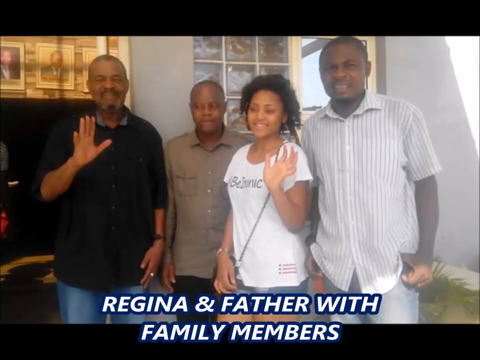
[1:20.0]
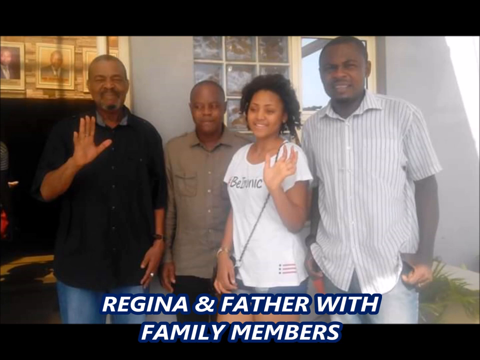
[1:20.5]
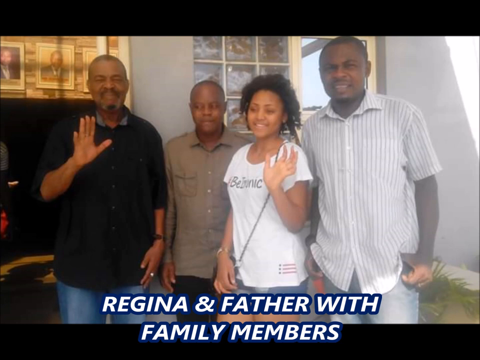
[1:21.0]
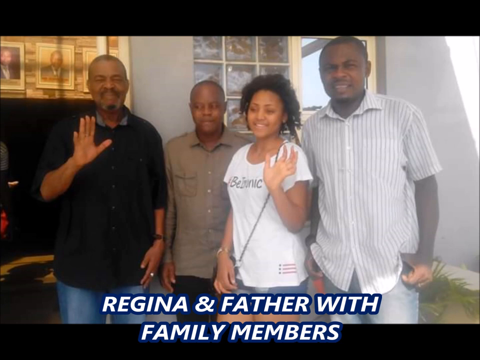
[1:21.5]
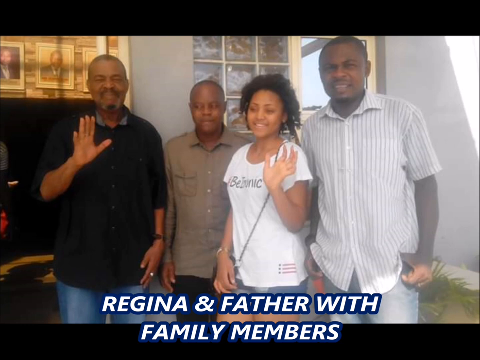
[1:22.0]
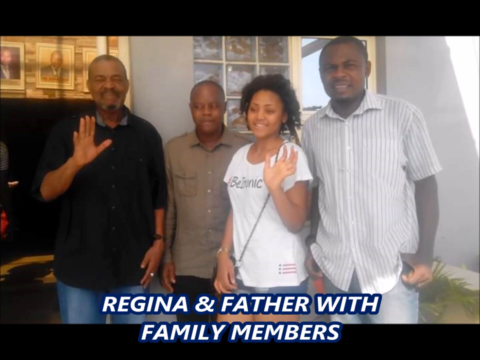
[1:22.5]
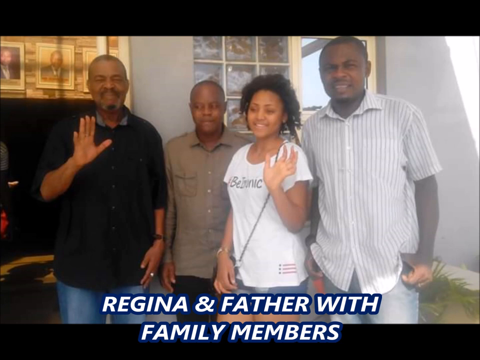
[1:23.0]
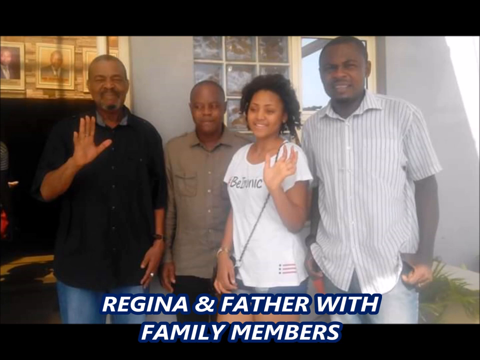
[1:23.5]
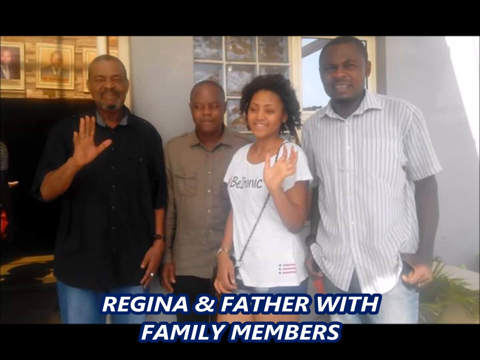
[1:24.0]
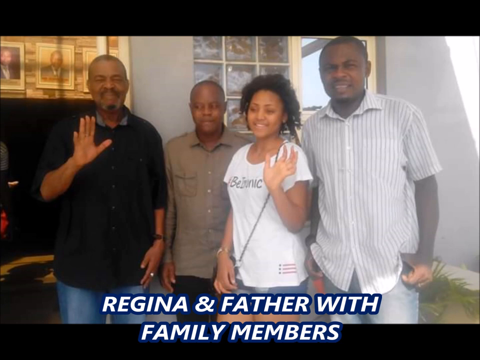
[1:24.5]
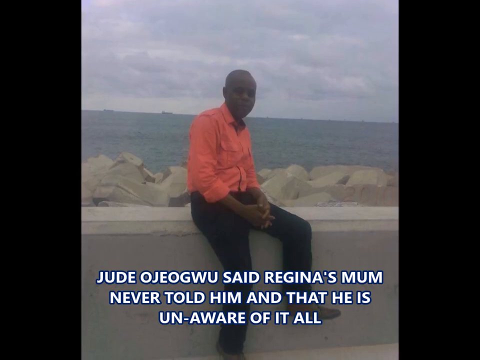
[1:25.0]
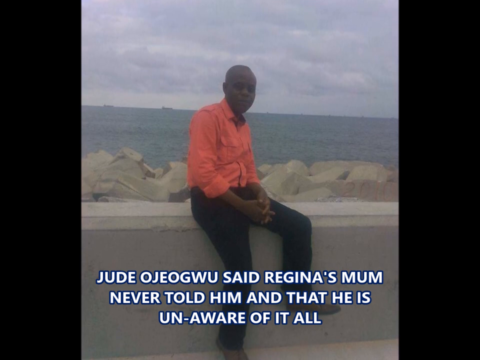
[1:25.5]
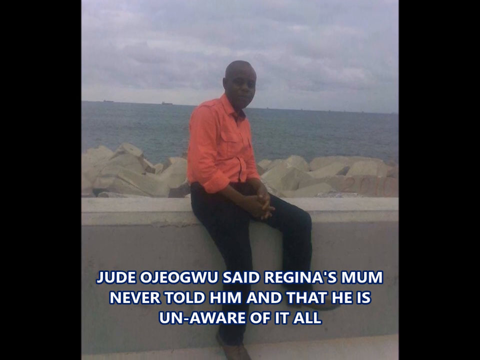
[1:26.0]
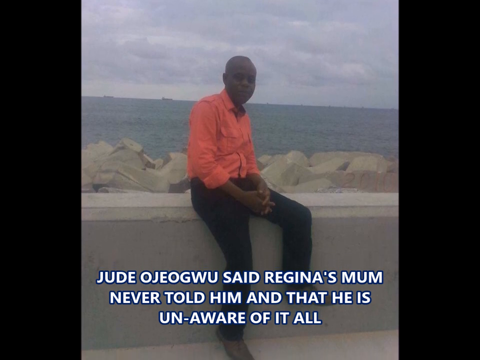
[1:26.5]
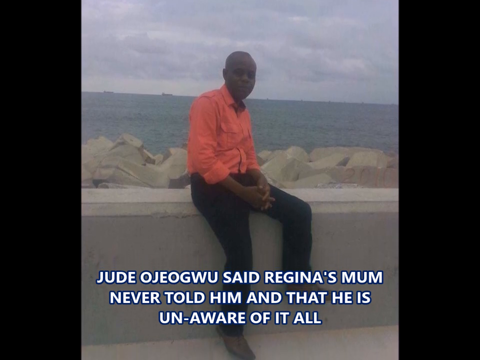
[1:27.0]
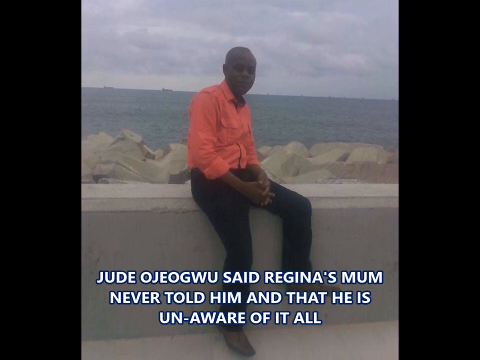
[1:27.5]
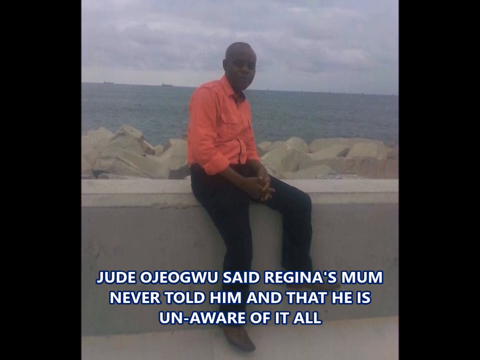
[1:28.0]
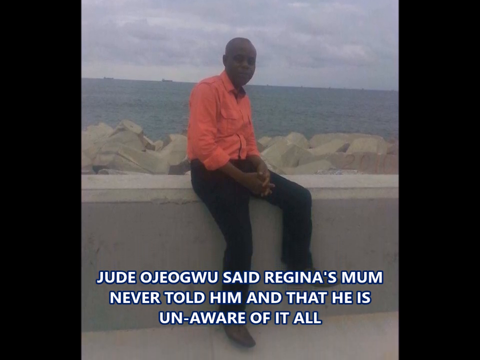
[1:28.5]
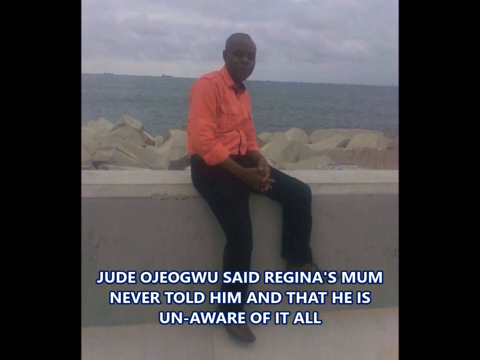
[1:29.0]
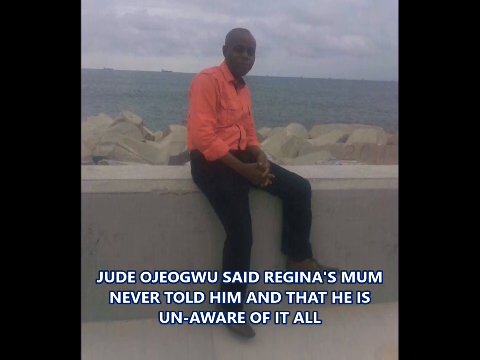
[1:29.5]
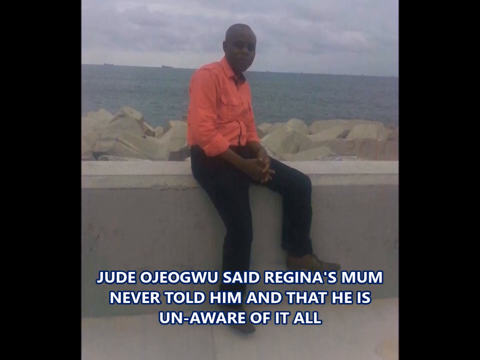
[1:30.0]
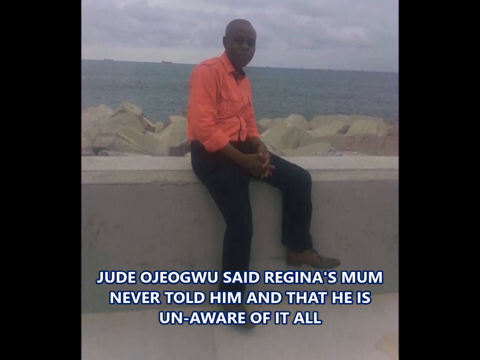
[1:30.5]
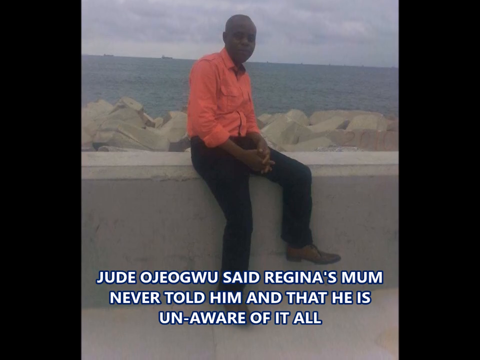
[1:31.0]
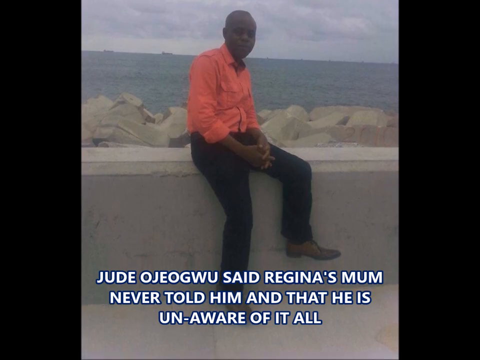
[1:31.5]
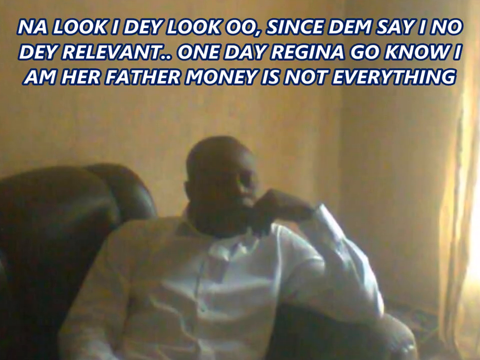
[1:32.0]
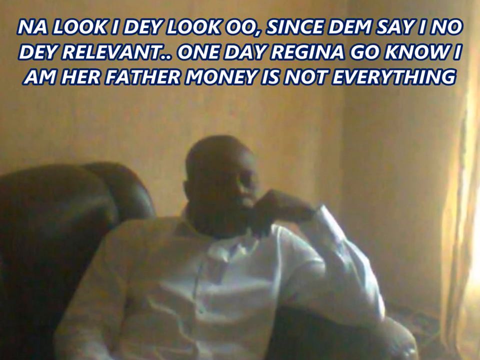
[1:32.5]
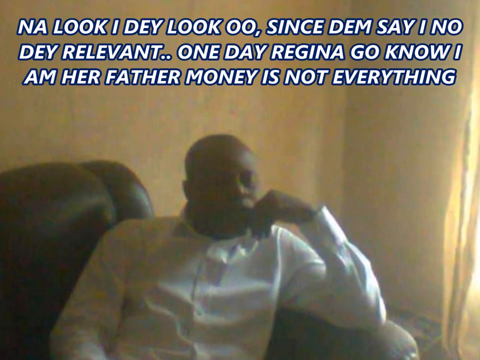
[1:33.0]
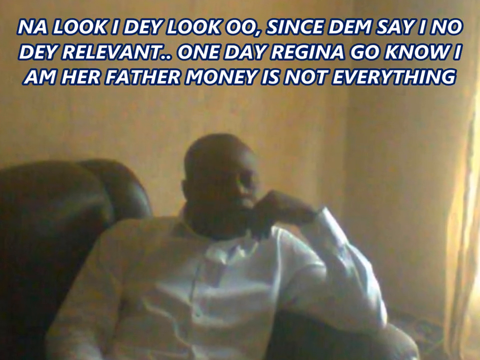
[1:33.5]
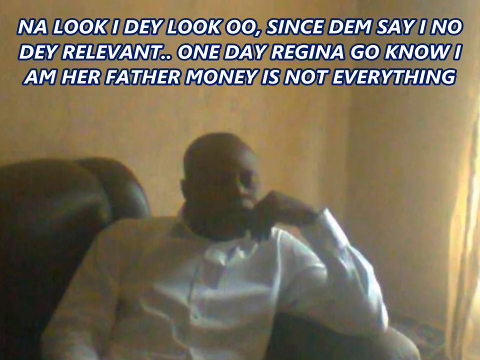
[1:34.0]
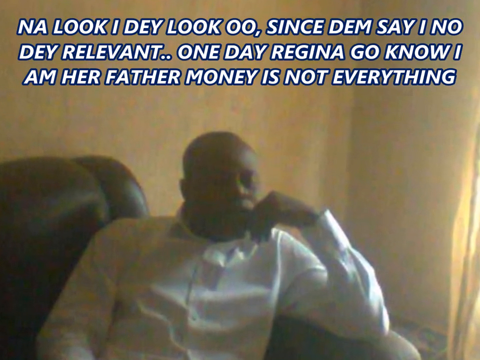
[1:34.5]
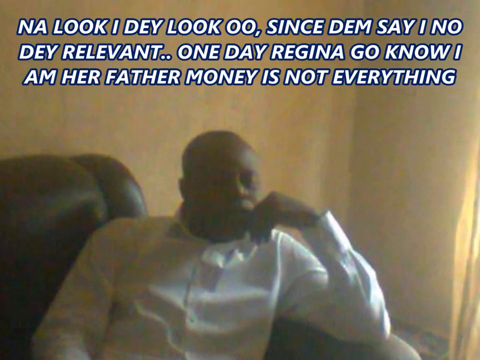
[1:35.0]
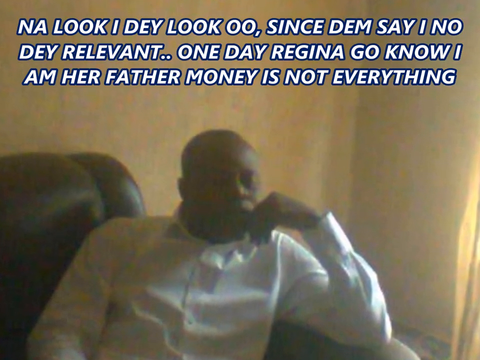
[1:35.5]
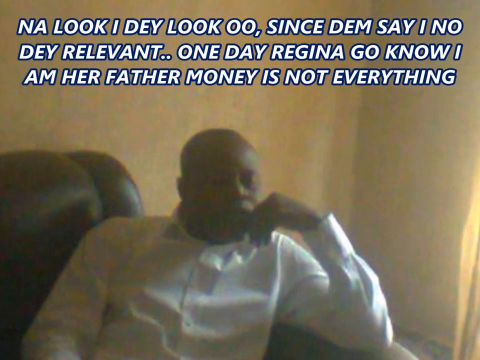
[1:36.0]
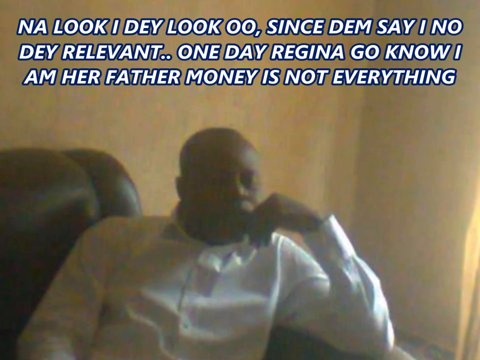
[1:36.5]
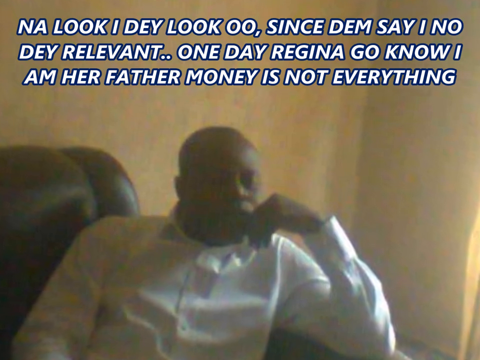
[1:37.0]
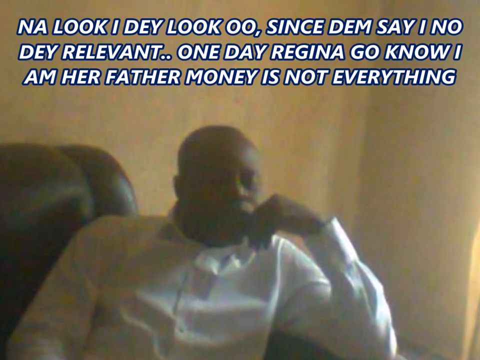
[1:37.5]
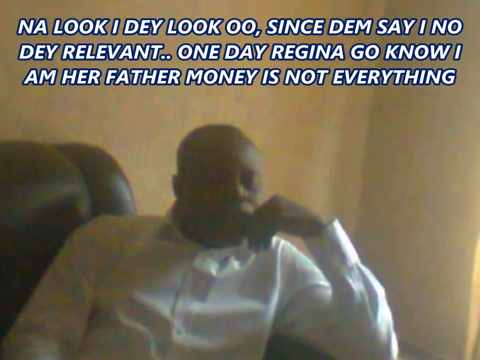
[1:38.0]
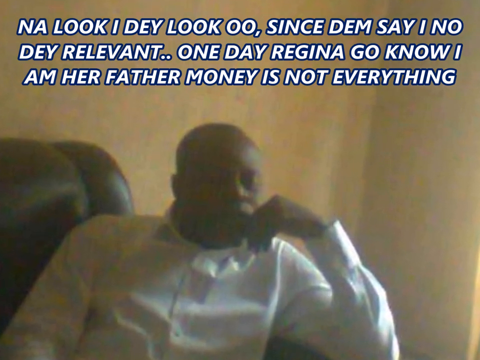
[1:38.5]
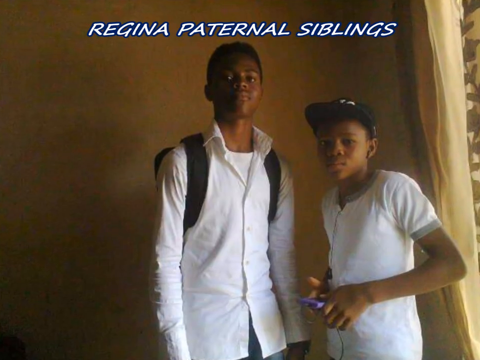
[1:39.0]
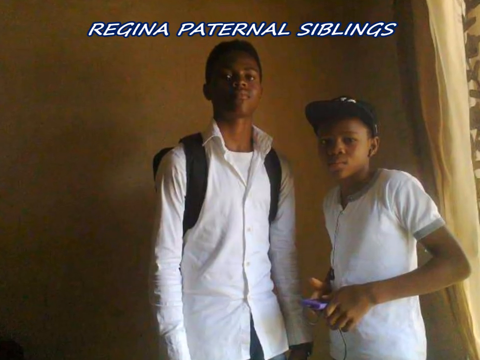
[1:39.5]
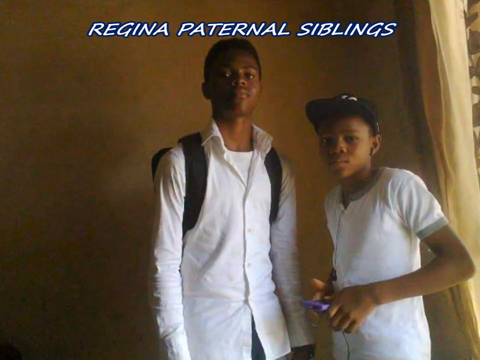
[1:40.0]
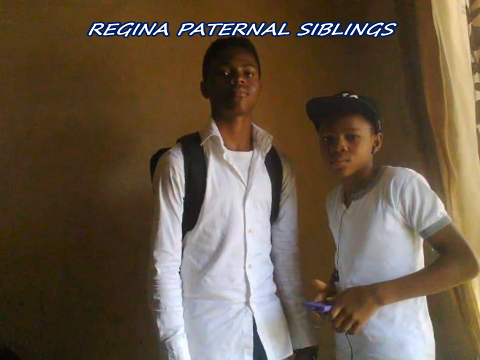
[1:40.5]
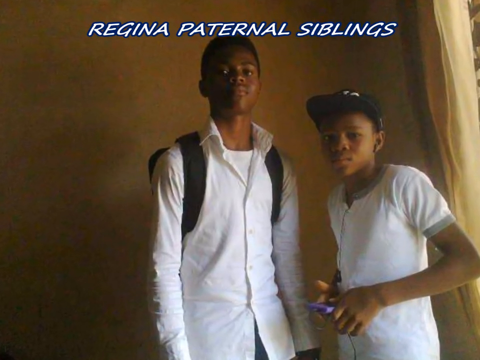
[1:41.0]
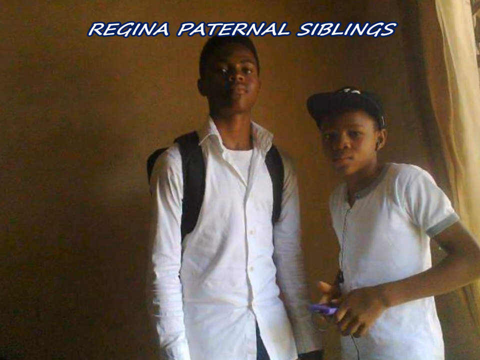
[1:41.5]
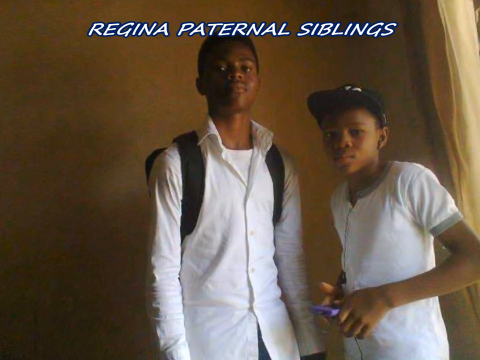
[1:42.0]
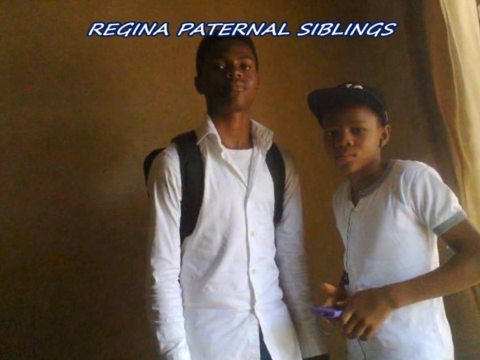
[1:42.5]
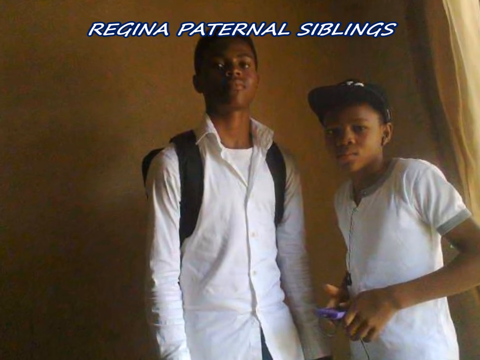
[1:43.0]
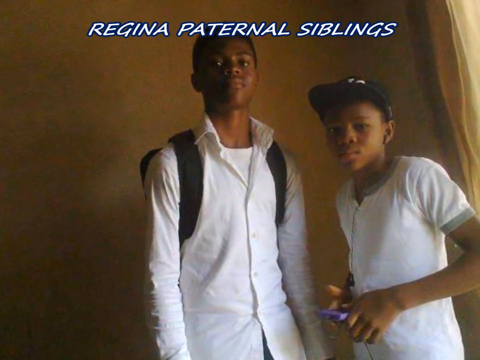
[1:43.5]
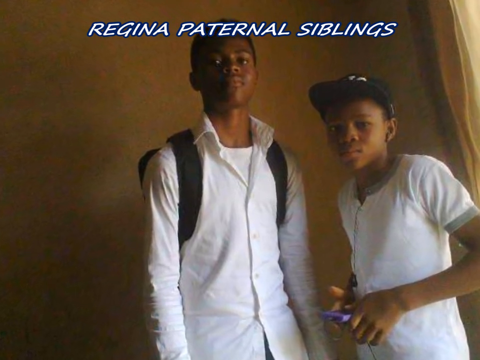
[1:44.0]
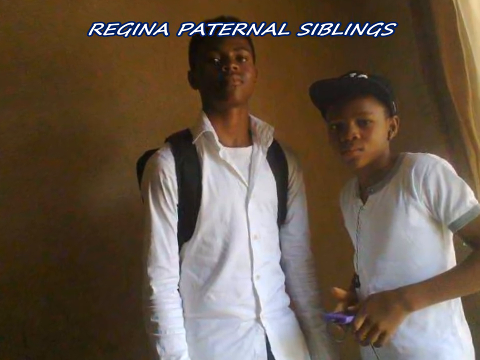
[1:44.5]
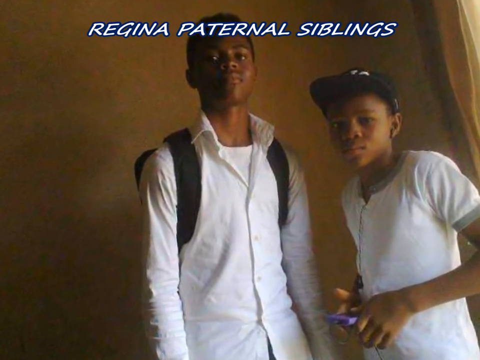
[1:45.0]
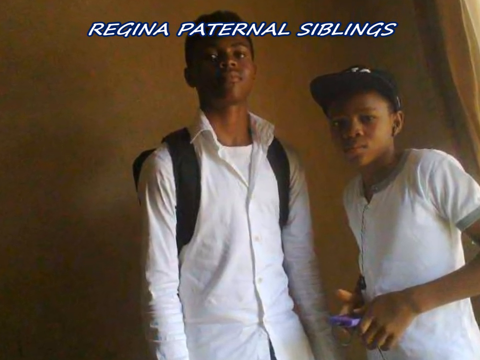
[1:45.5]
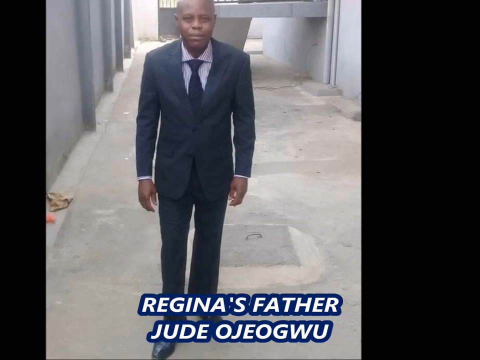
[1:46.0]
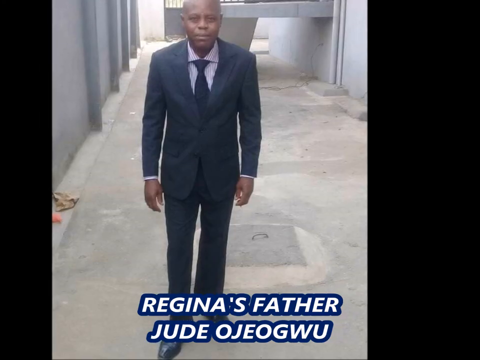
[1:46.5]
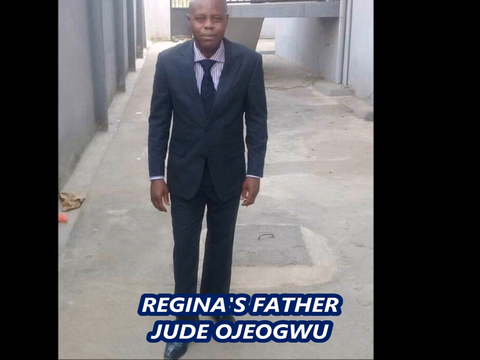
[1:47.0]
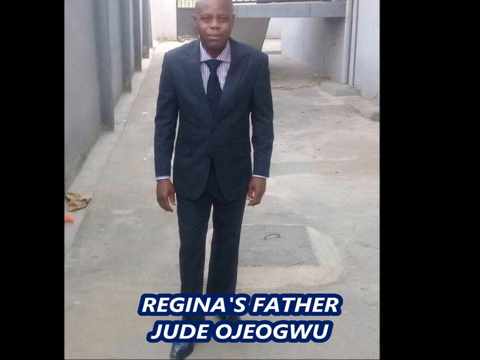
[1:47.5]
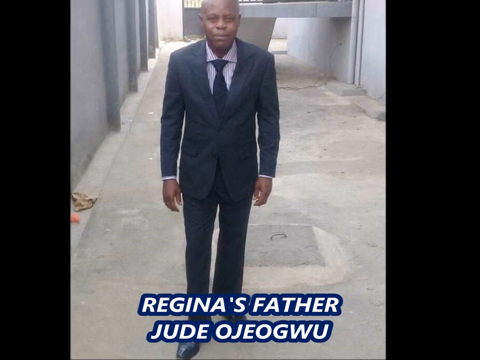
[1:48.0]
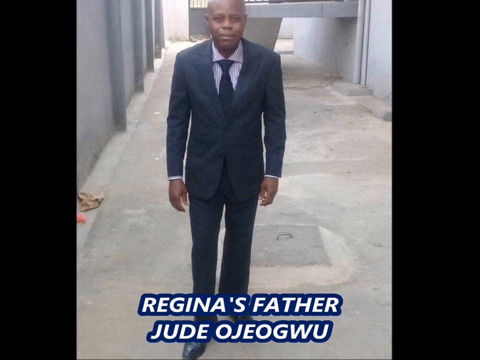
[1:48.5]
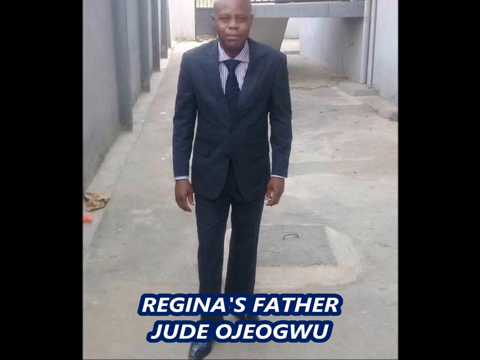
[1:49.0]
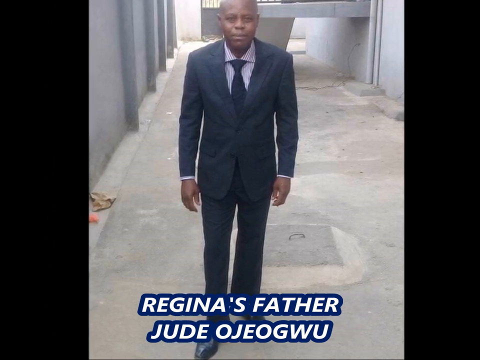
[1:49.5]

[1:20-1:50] Family members stand together with her in the middle and three other men standing beside her, possibly relatives from the father's side. Text from another video says that Jude said Regina's mom never told him and that he was unaware of it. Jude wears an orange top, black pants and boots and is sitting, with rocks, a river and a white sky behind him. Another picture carries text including "I am her father money is not everything". The dad sits on a chair with his hand under his chin, apparently thinking about the situation. Another picture shows paternal siblings: two boys standing in white tops, one wearing a face cap and the other with his back turned. Another picture shows the father wearing a suit and posing for a picture.